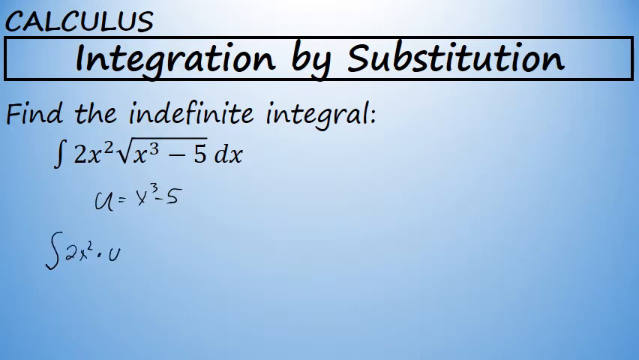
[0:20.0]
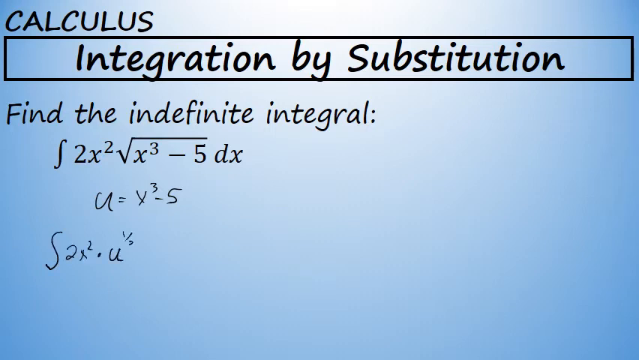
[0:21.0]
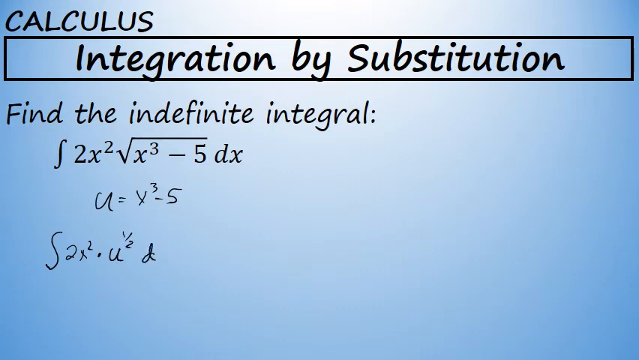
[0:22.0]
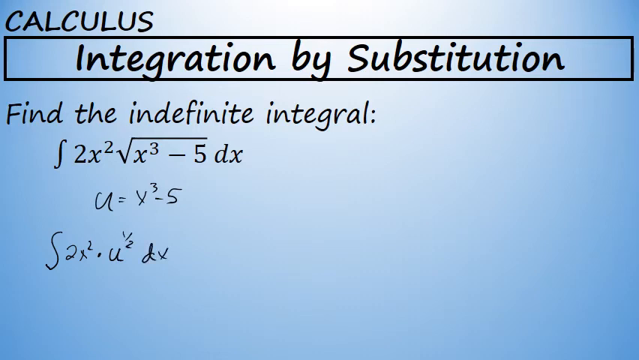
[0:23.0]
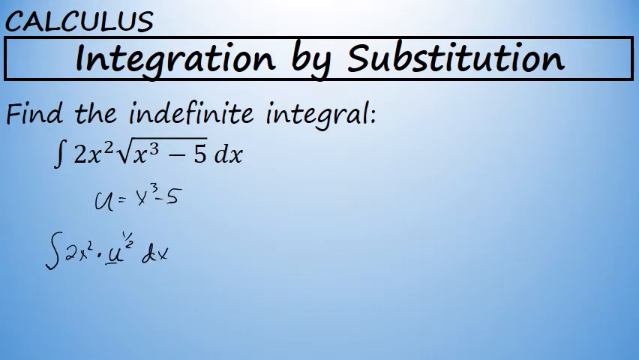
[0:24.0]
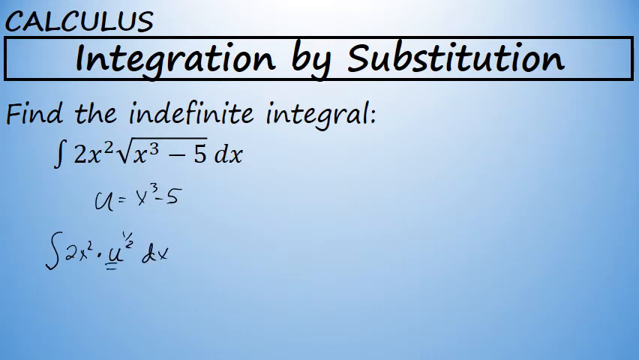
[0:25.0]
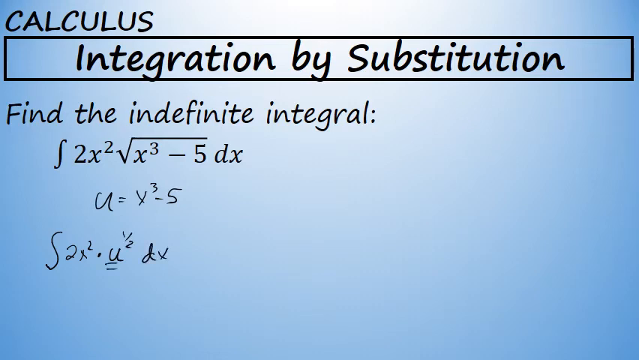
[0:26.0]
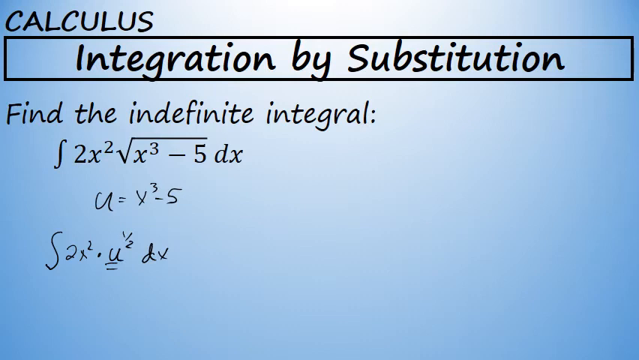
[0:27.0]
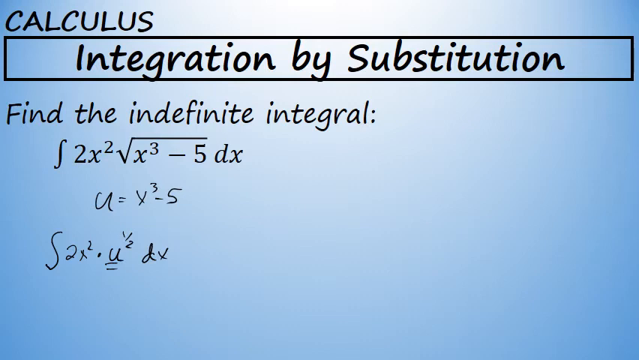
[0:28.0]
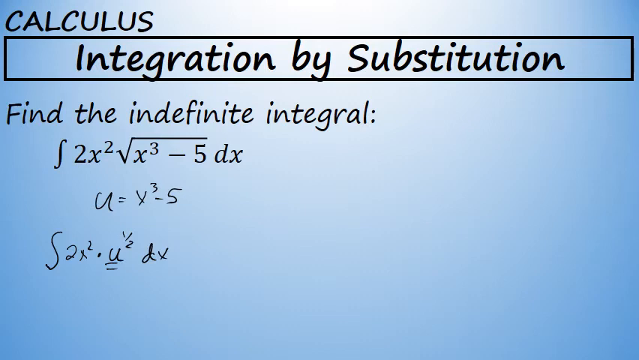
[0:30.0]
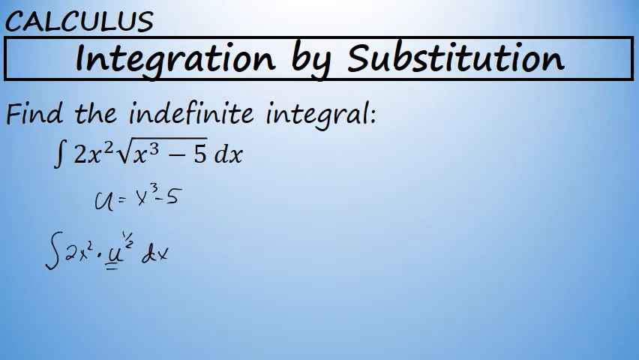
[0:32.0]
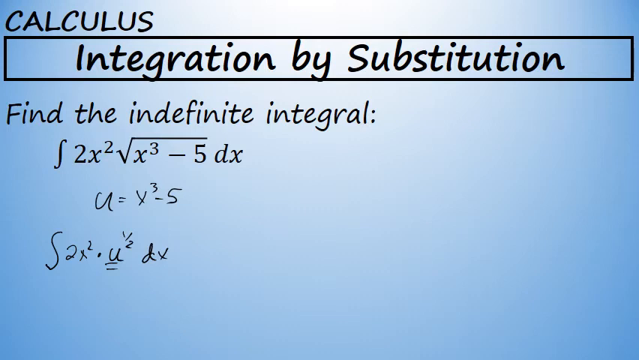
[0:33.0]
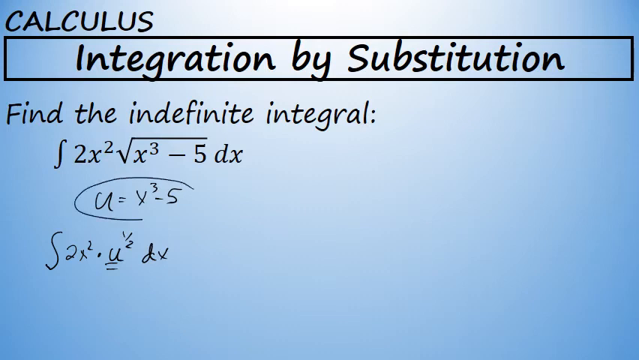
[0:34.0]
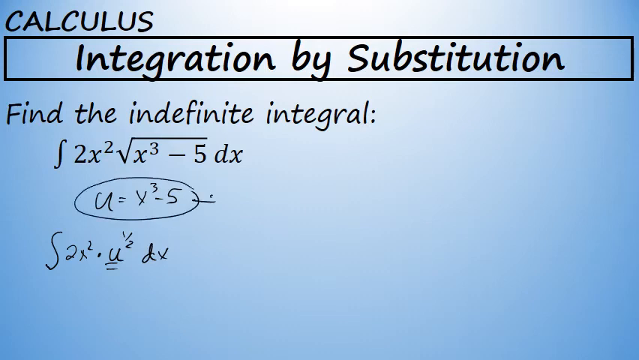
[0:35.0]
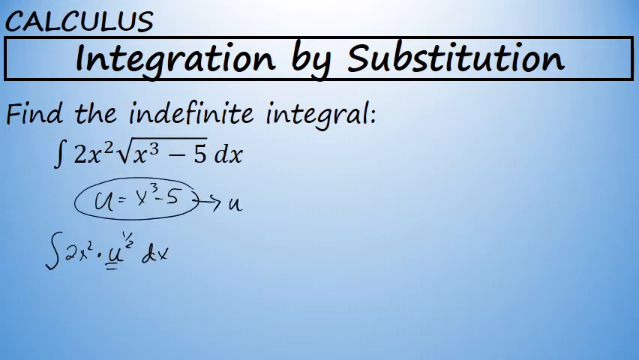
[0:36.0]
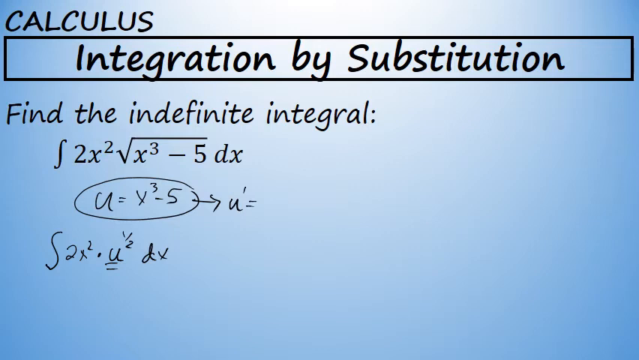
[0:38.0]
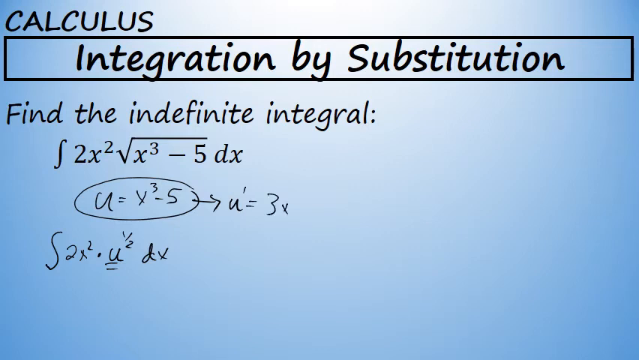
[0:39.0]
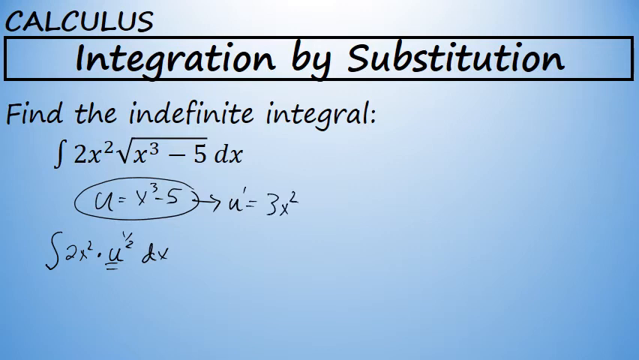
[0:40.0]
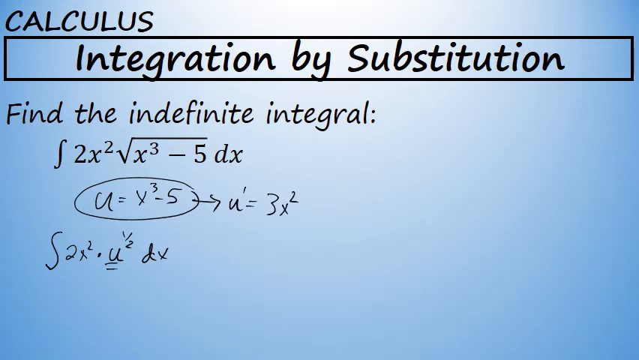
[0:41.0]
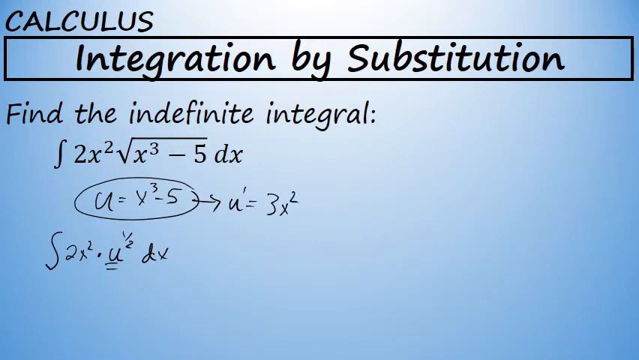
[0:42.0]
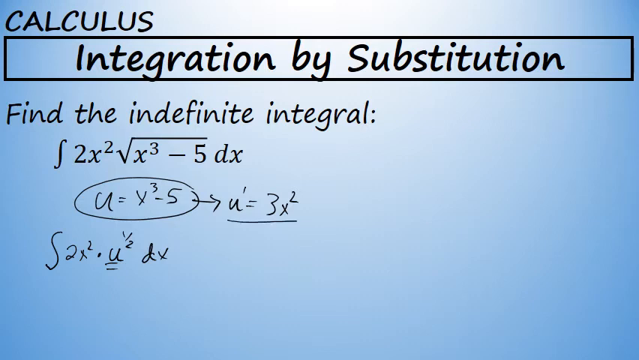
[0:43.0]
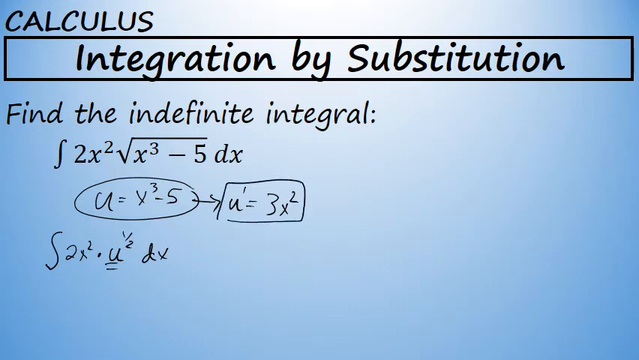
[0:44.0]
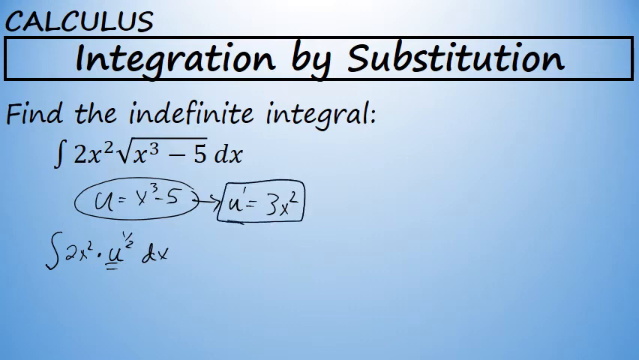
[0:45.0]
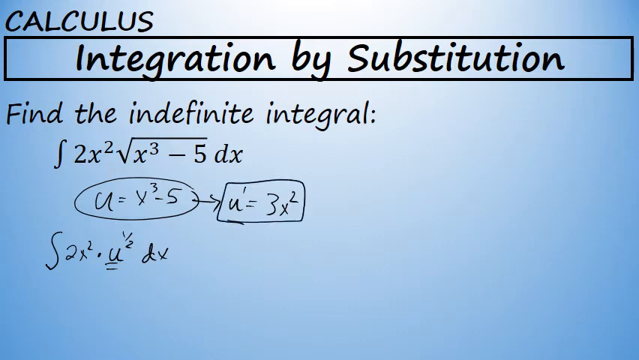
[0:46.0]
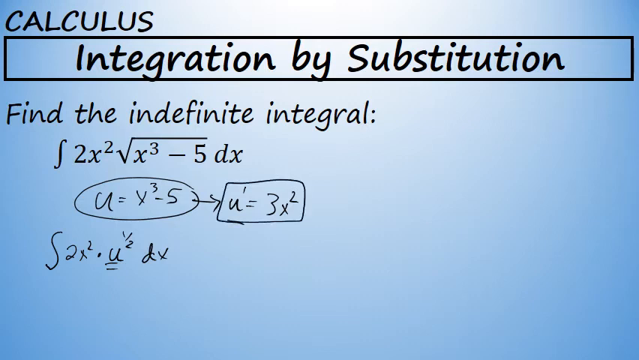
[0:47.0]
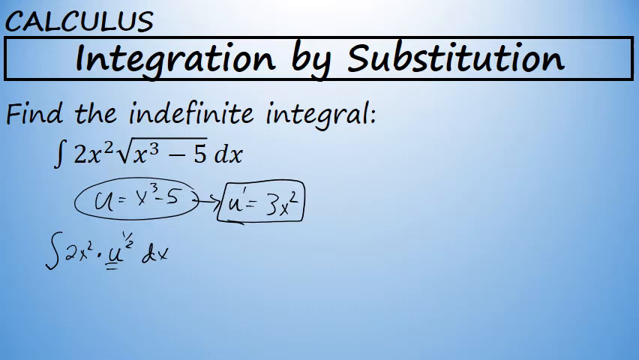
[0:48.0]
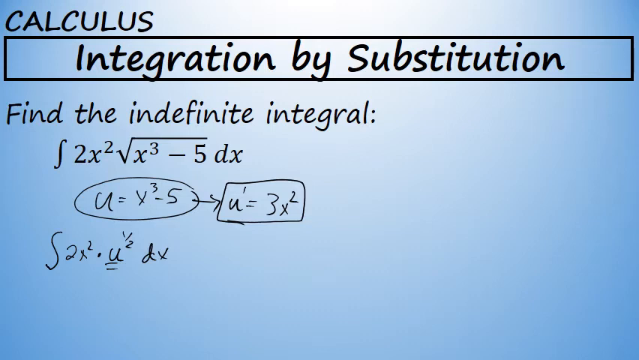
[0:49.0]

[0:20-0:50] The whole screen is blue, darker at the outer parts and lighter toward the middle, where it is almost white. In the top left-hand corner the word "calculus" is written in black. Beneath it is a drawn rectangle running from the left of the screen all the way to the right, containing "integration by substitution" in black. Below that is "find the indefinite integral", and under that an integral symbol, a 2 and an x with a superscript 2, a long division symbol, and to its right an x with a superscript 3, a minus sign, a 5 and dx. Underneath, someone has apparently written u equals x superscript 3 minus 5. Below that is another integral symbol with 2x superscript 2, a period and a u, which is underlined twice, followed by d and x.